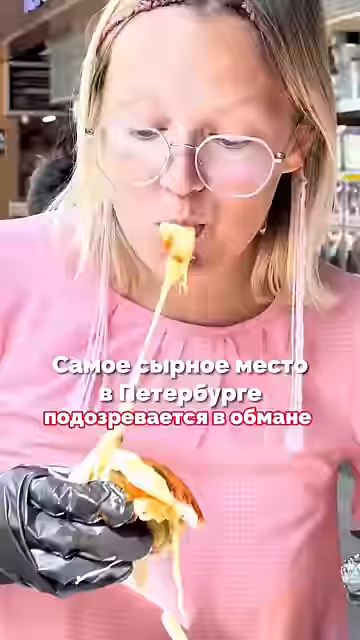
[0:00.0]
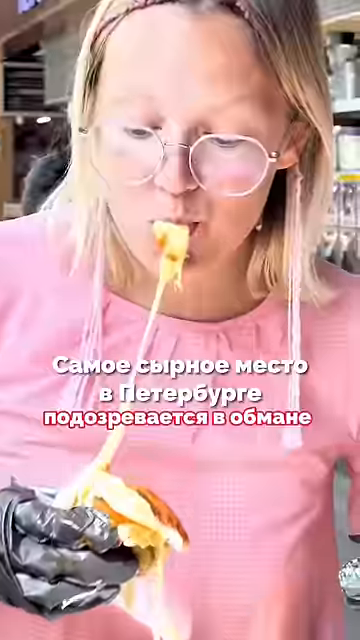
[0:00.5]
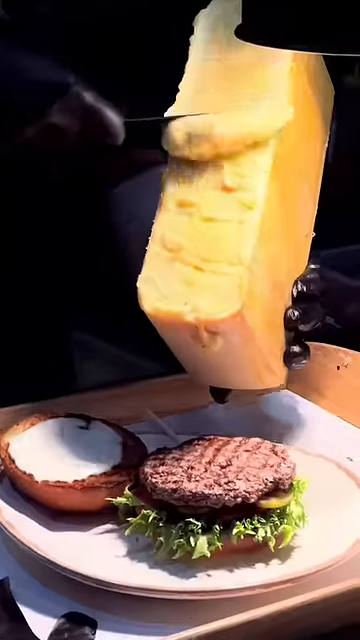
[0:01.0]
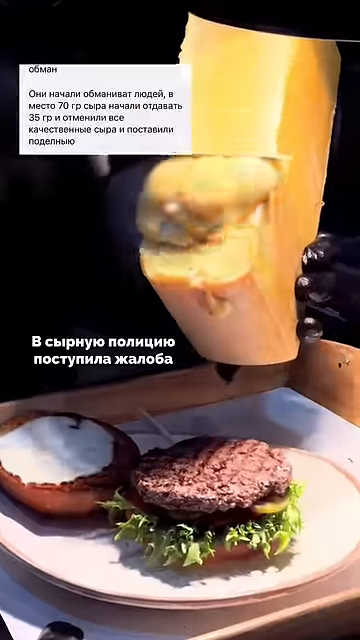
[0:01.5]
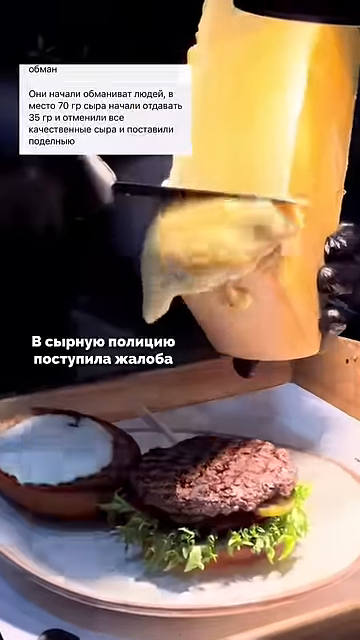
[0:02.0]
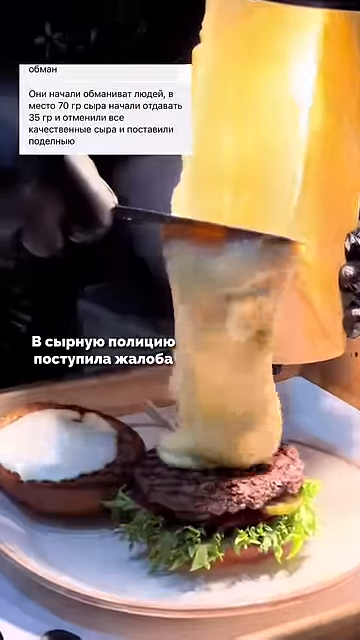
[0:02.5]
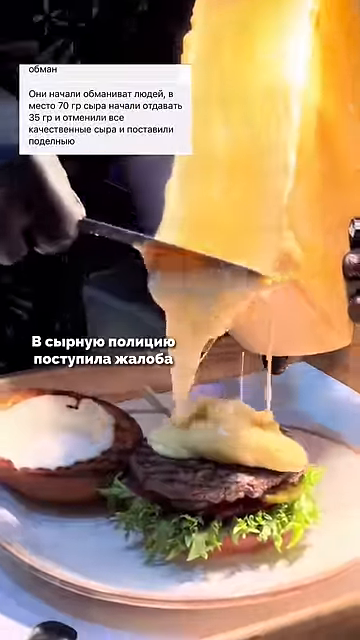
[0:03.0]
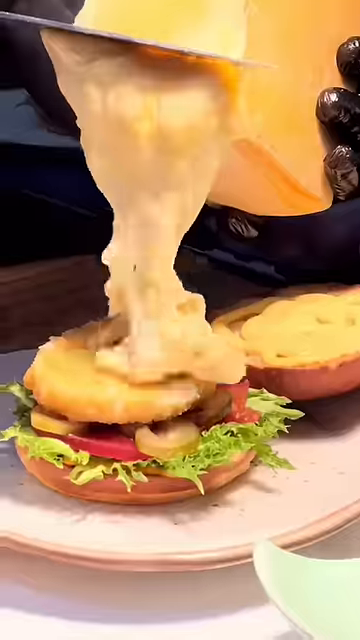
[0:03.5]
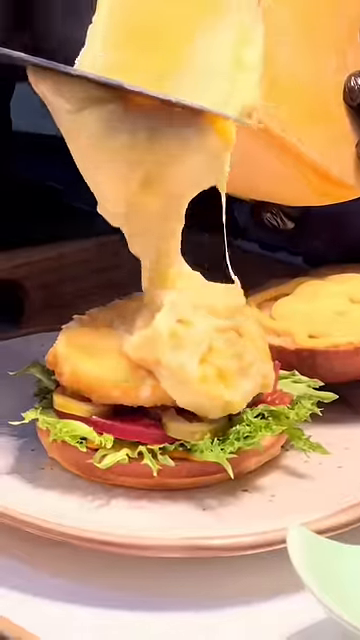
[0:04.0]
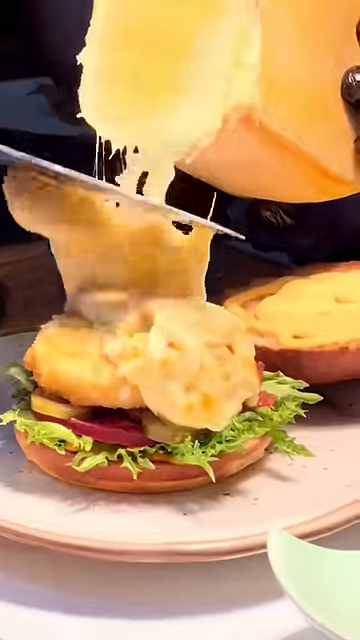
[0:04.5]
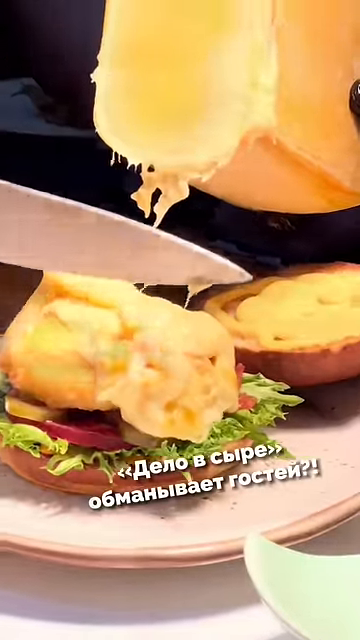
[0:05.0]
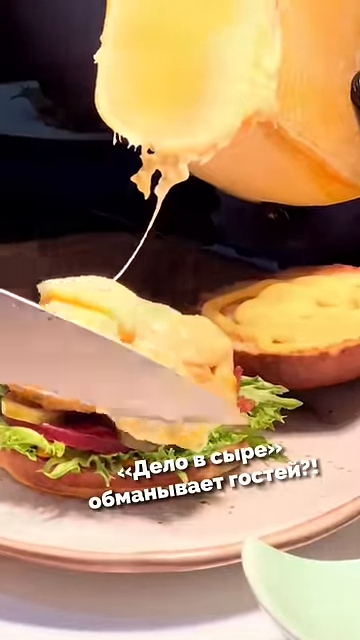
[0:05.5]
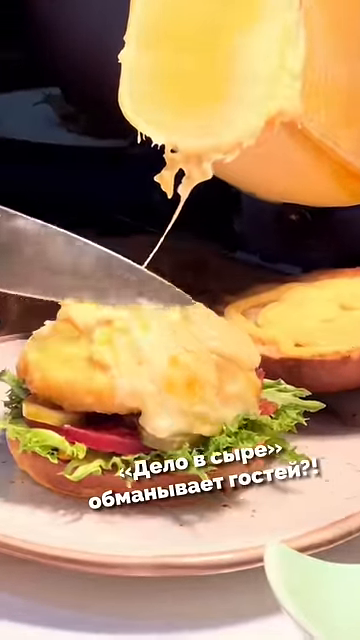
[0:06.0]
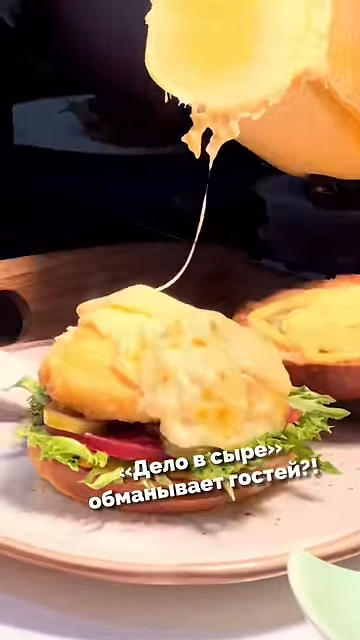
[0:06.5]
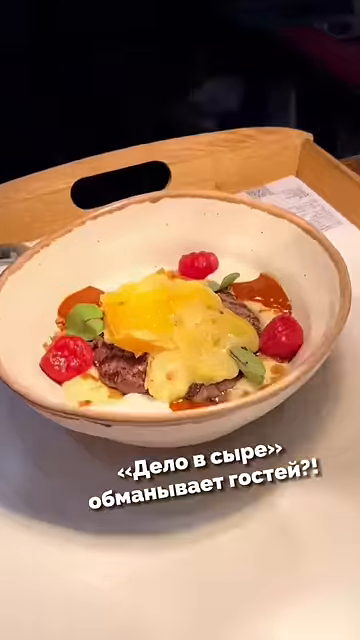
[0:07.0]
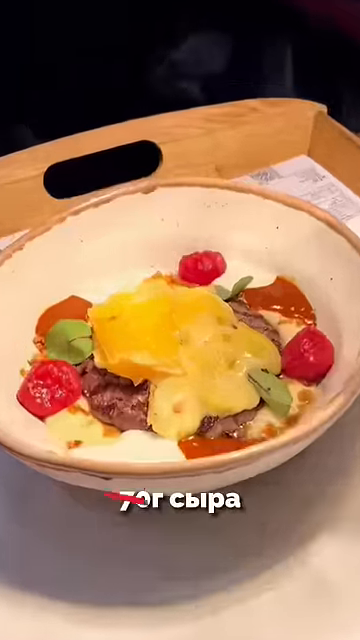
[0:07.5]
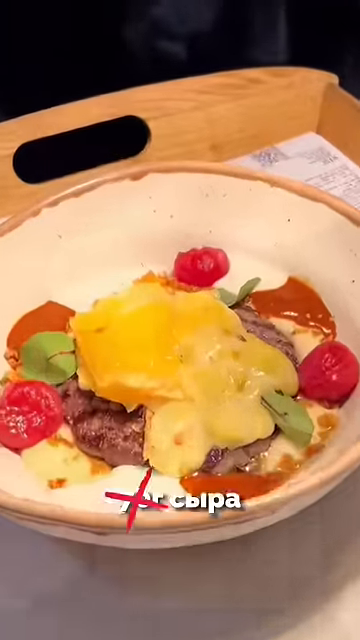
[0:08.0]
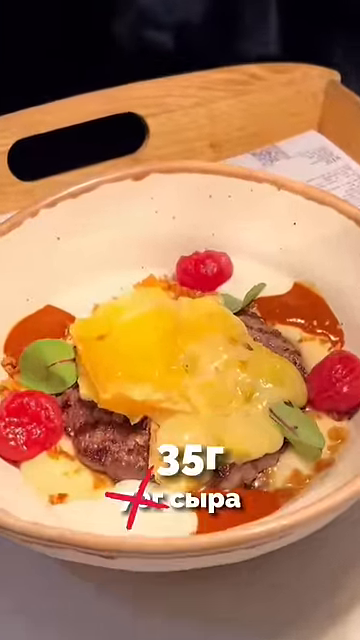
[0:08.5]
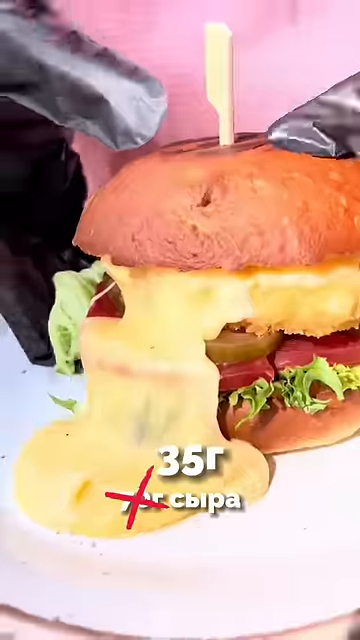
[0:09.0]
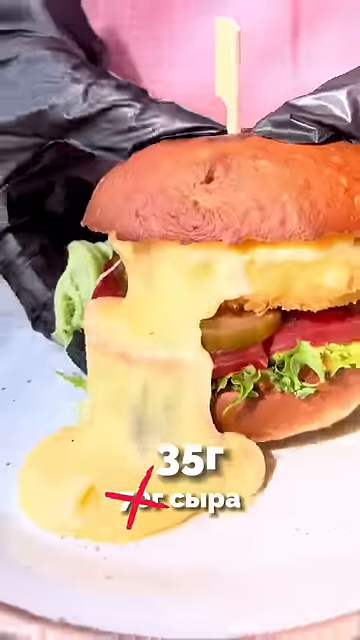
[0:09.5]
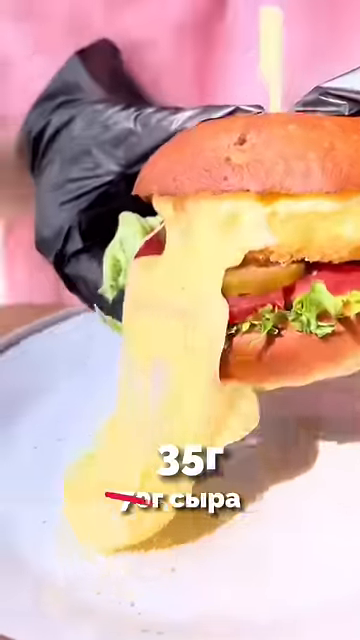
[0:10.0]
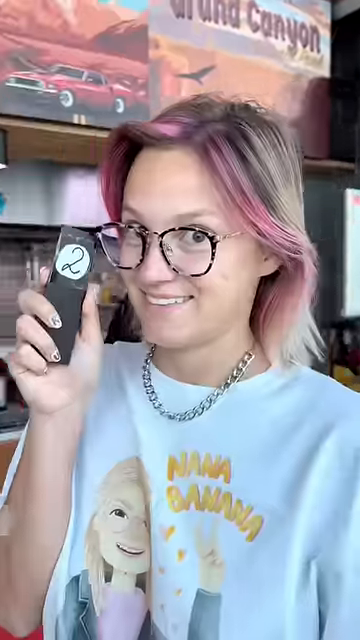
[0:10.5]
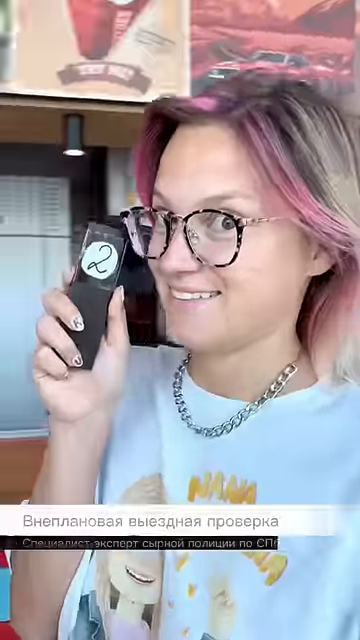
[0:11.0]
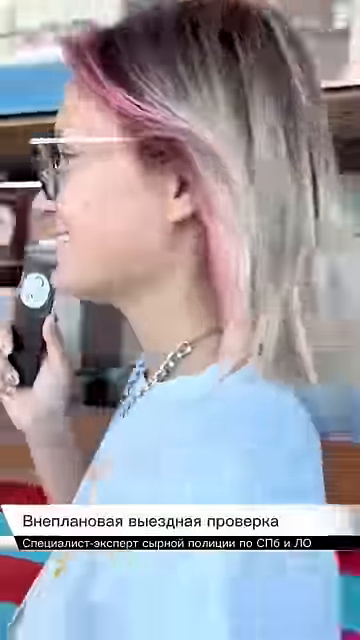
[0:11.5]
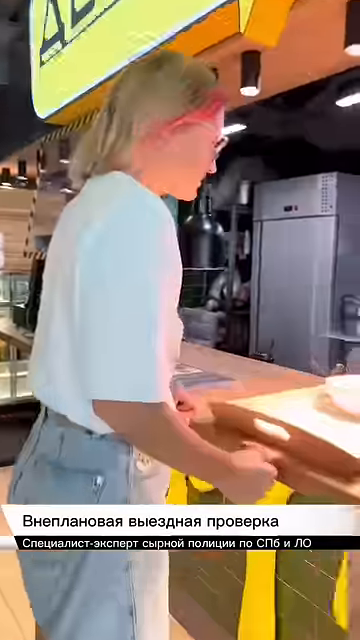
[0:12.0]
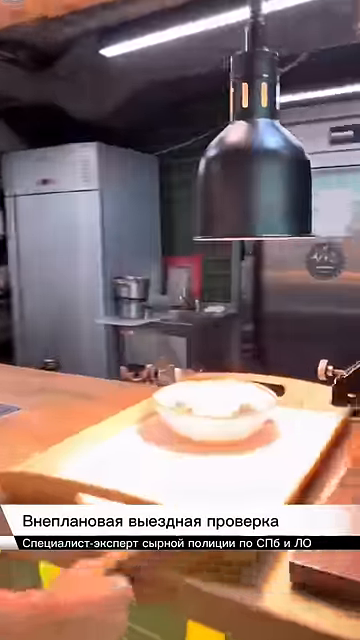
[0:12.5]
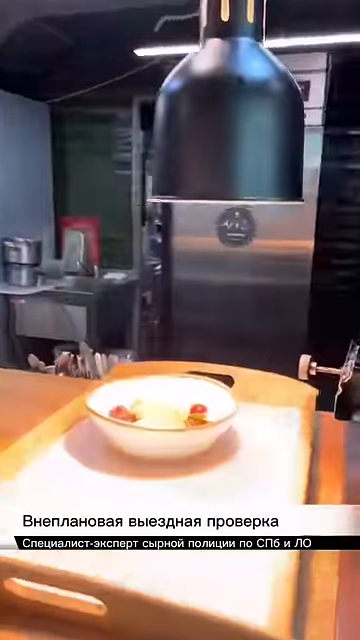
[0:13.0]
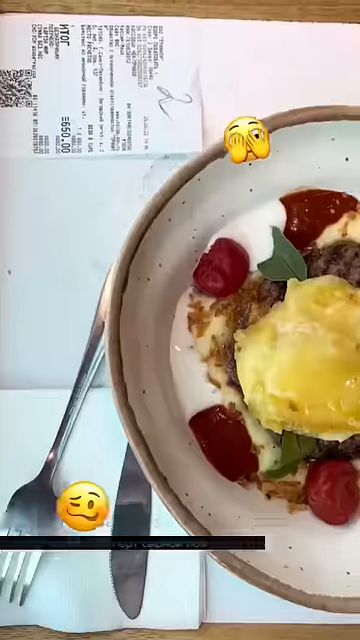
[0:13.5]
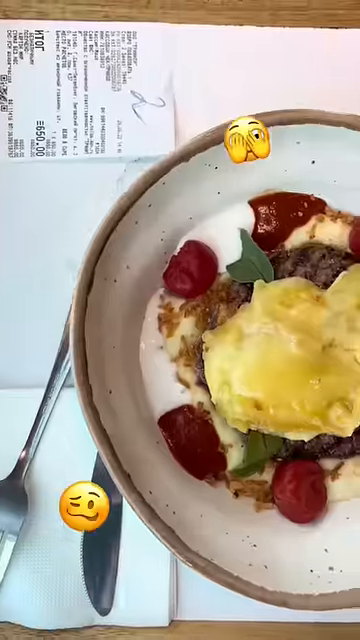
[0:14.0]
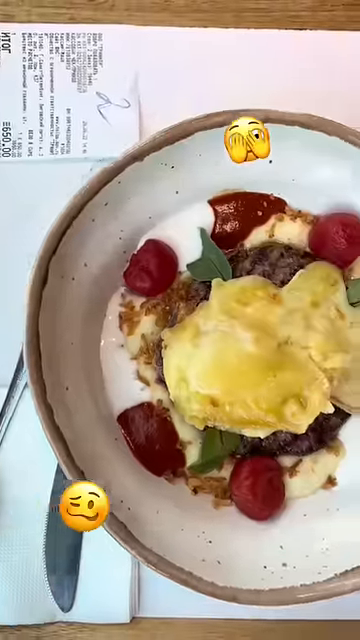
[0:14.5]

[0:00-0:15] A person of Asian descent is eating at a restaurant. Cheese is grated and slid onto a burger, a beef burger with lettuce and tomato. The top bun is initially off the burger; after the cheese is grated on, the top bun is closed to complete the burger. A knife makes sure all of the cheese is placed properly on top. The scene then moves to another food item in a bowl, likely fruit such as raspberries. Russian text in the Cyrillic alphabet runs across the bottom of the screen.